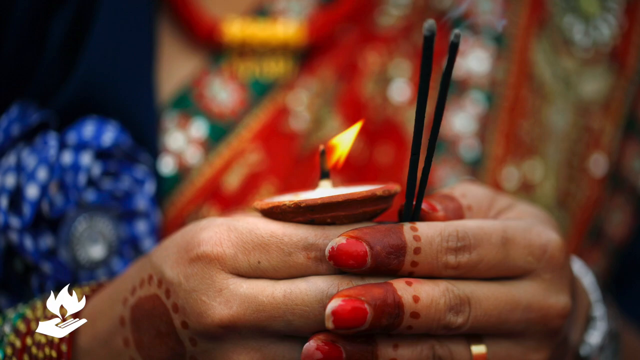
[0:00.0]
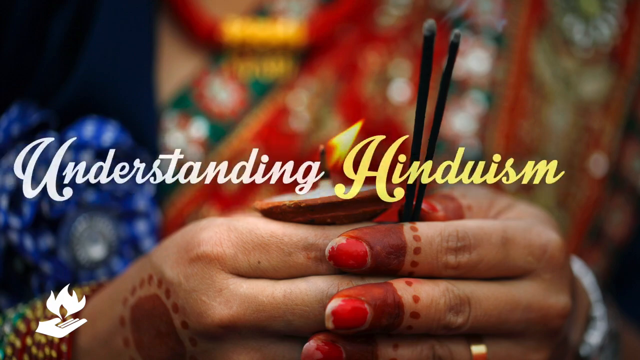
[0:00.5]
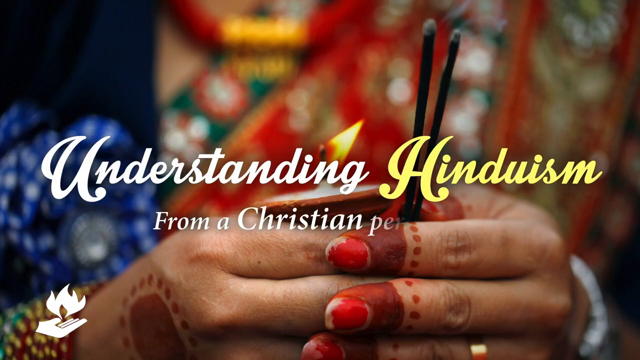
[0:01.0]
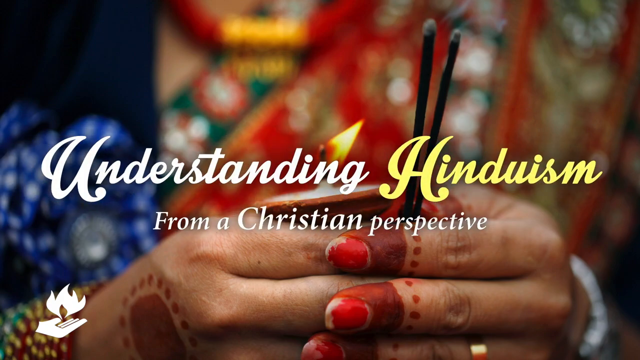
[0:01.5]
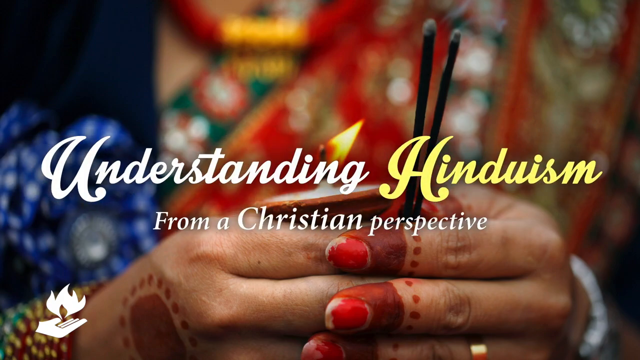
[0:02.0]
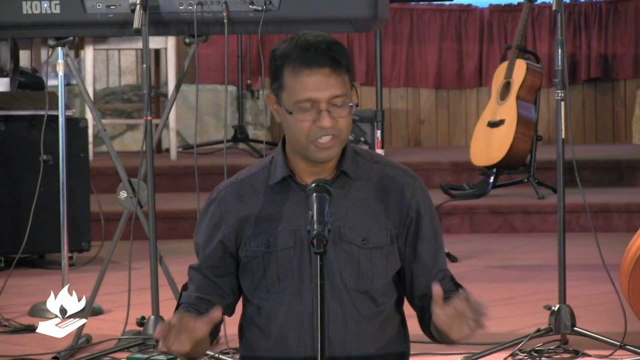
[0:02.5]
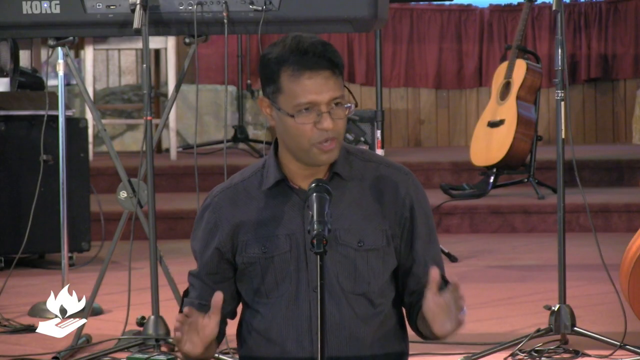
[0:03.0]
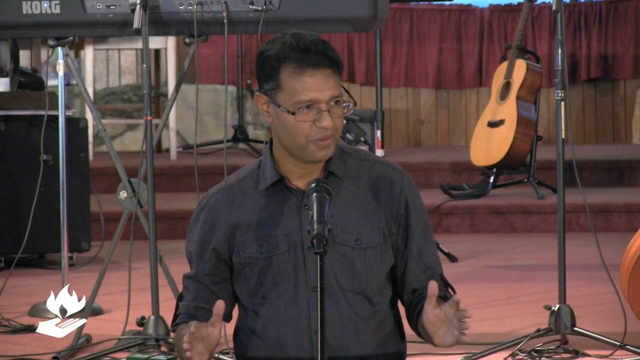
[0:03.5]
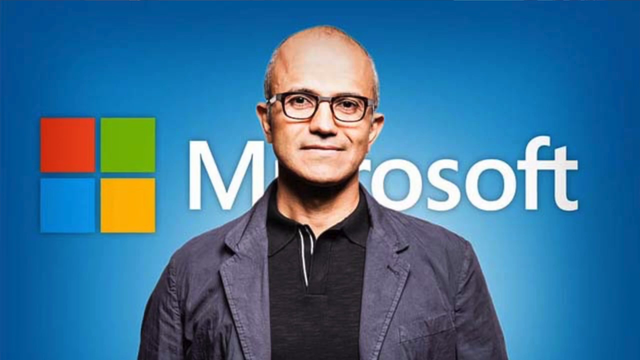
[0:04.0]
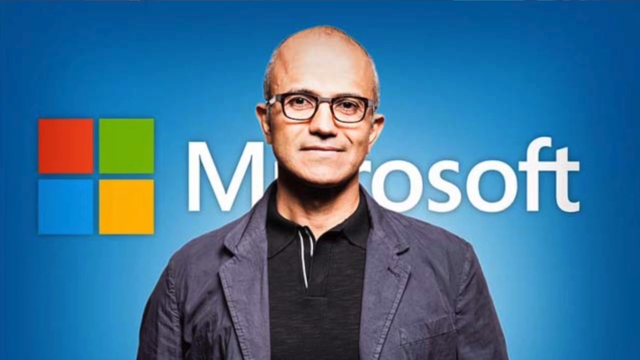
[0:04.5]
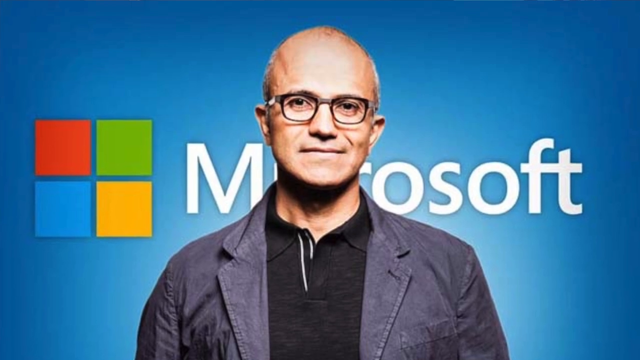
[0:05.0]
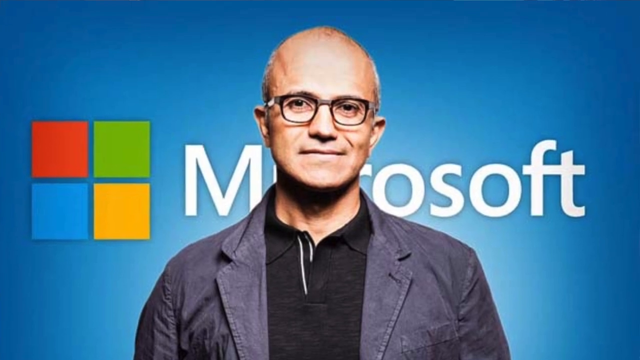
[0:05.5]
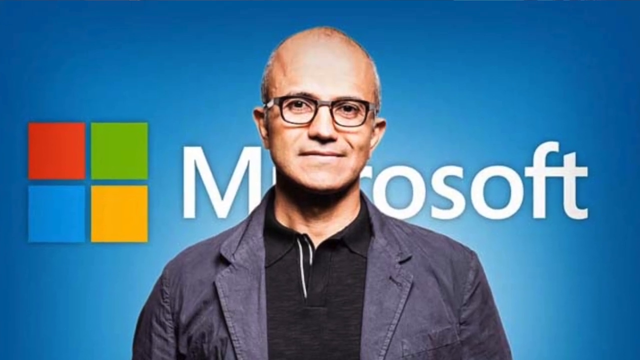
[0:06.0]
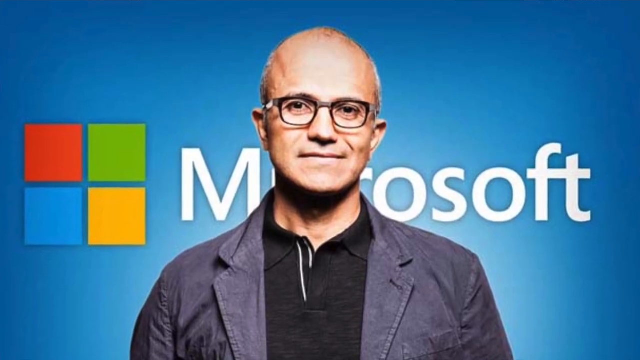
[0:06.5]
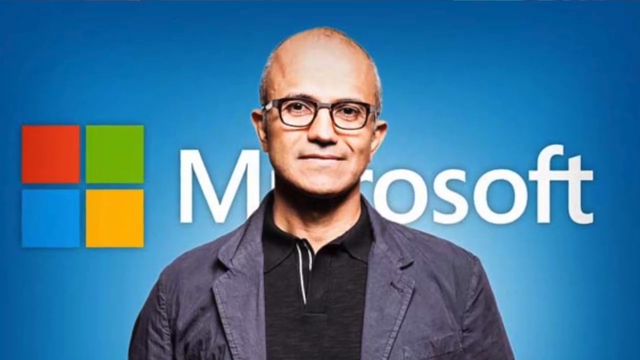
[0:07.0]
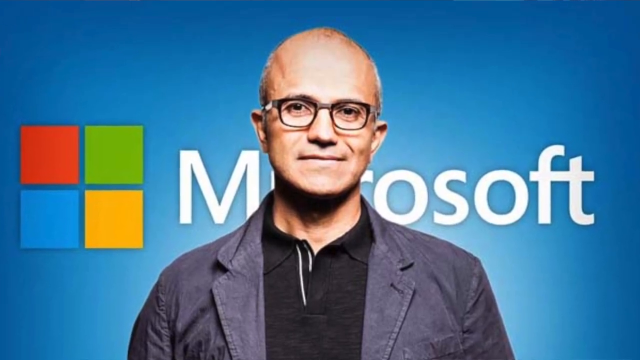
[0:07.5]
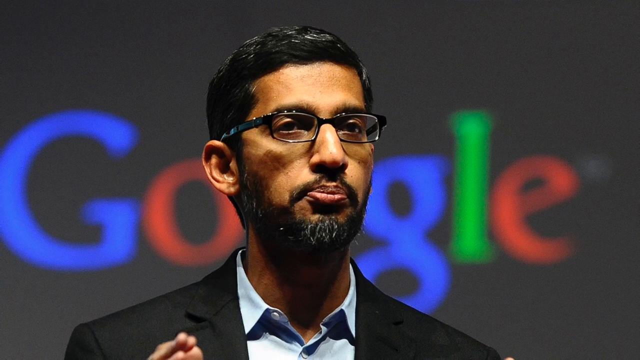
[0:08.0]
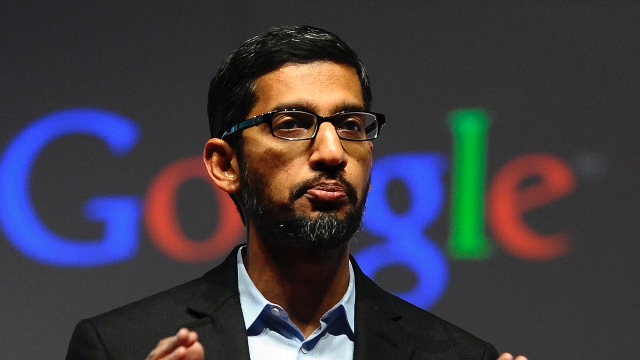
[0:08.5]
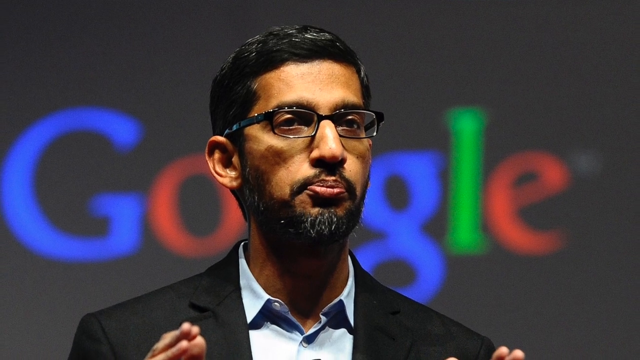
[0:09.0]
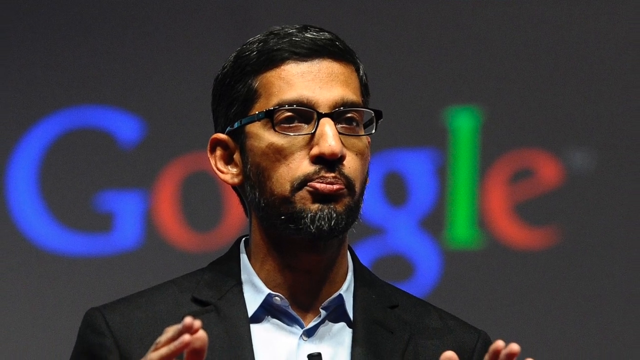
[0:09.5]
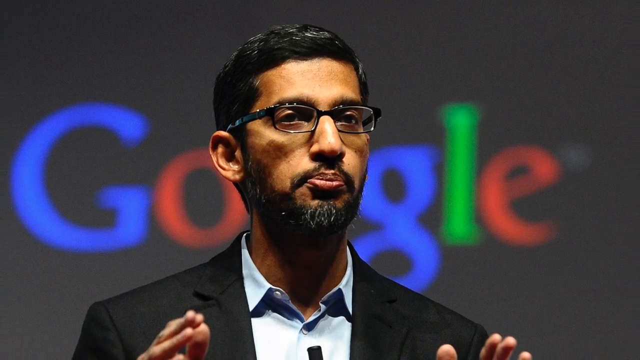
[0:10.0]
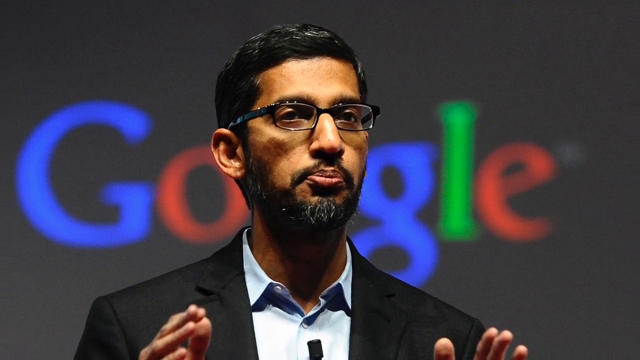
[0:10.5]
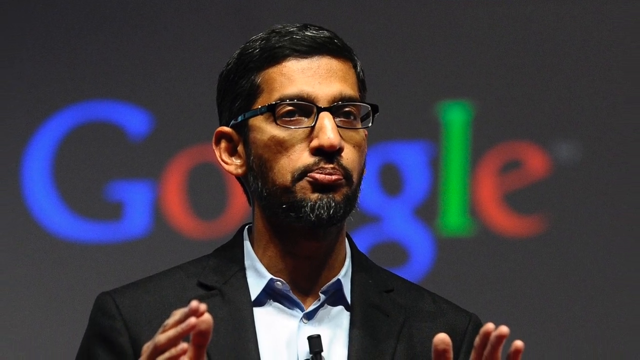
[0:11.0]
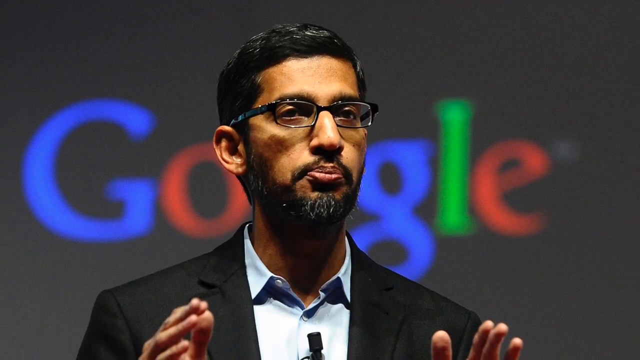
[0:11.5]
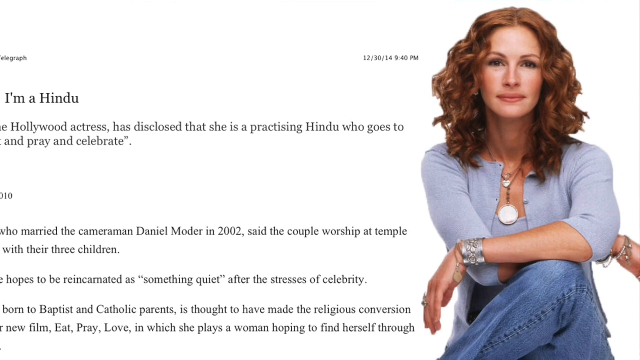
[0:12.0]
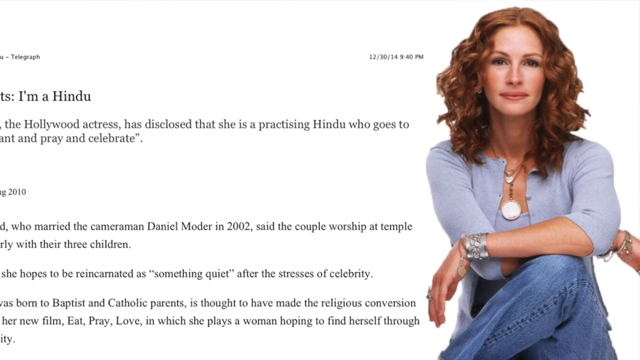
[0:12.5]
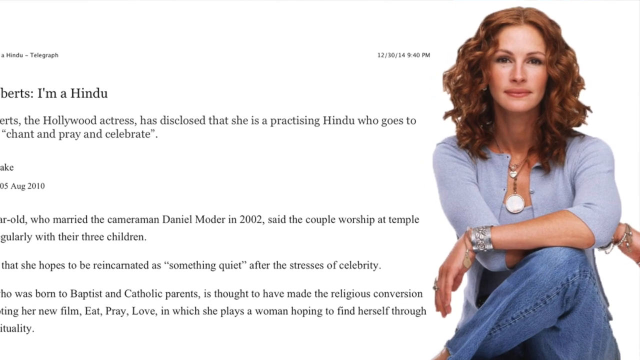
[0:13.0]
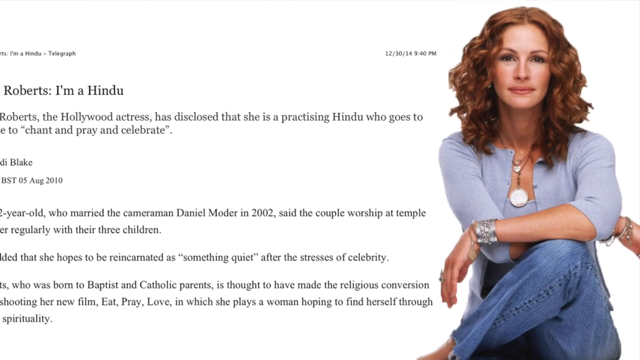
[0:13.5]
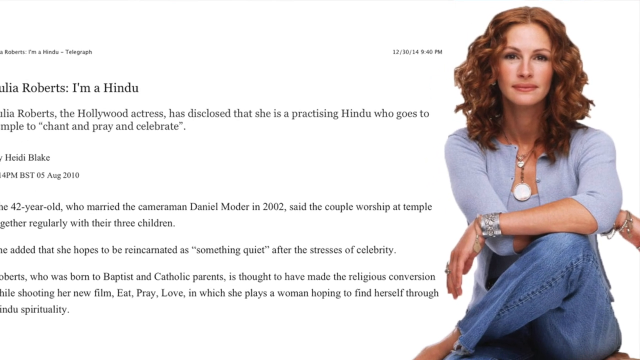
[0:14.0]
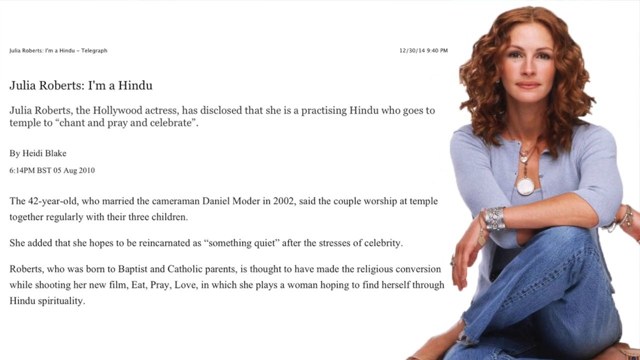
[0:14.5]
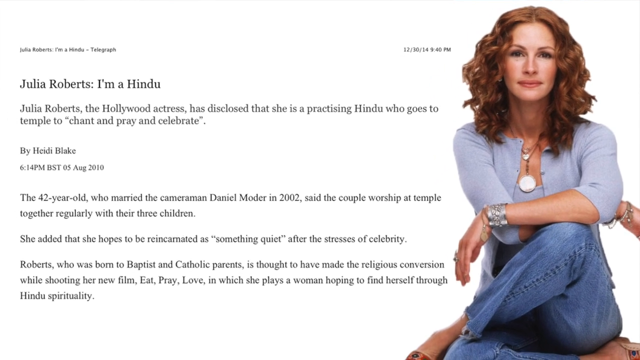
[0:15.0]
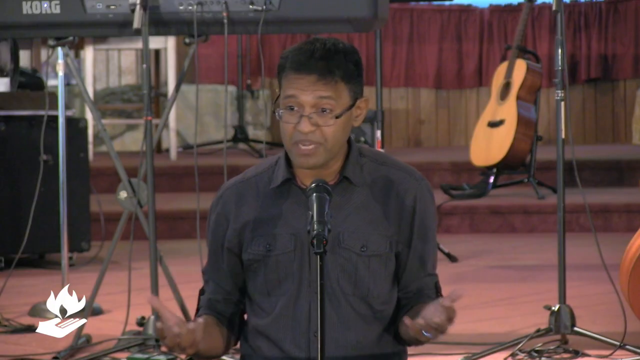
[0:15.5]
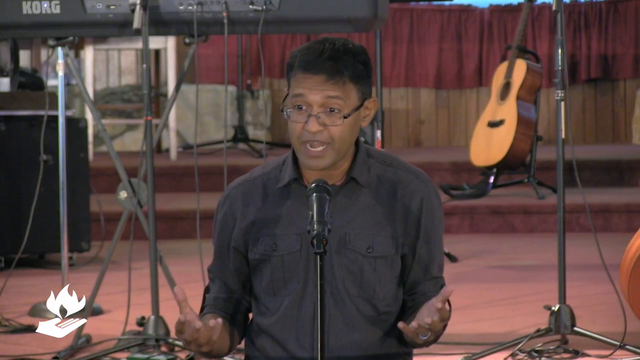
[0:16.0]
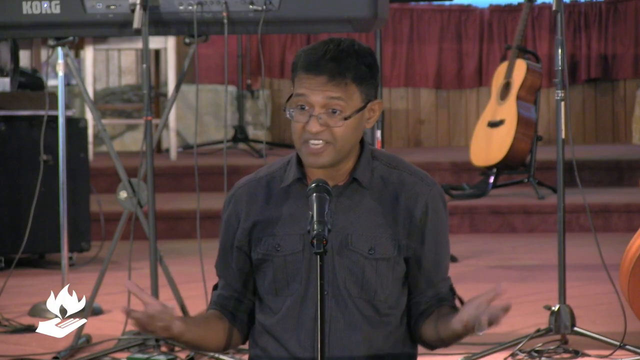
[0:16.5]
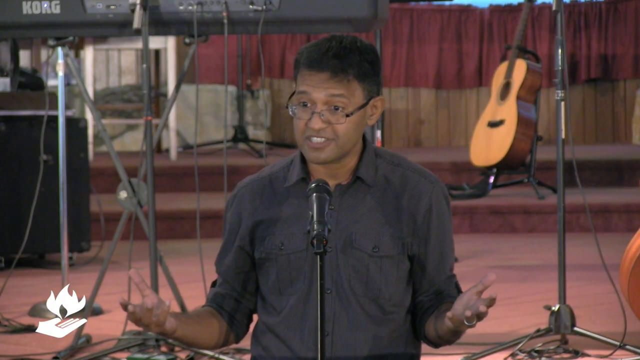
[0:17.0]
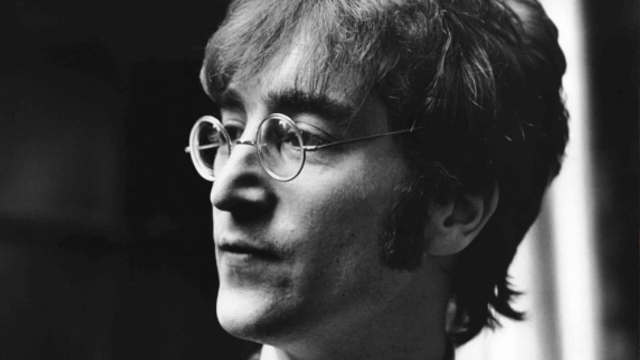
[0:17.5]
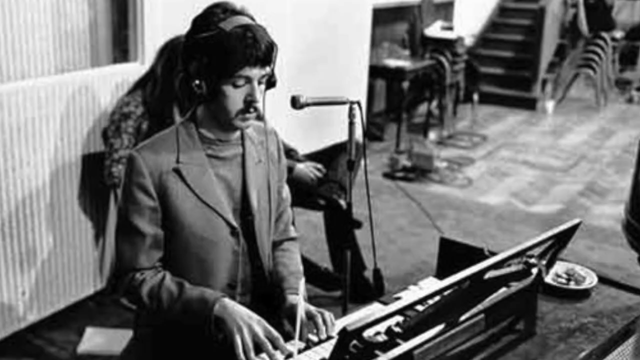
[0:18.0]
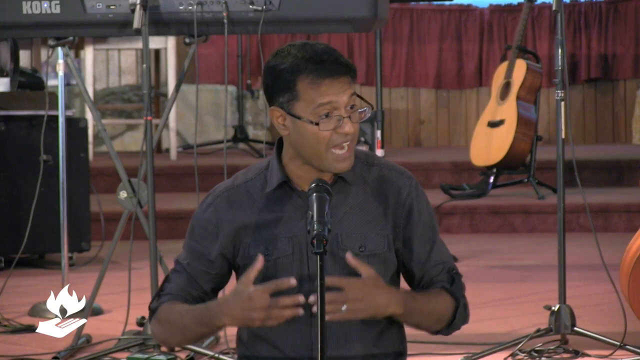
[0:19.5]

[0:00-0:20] A pair of hands holds two incense sticks and one candle. The fingertips on the right-hand side appear to be painted red with dots, and the woman's fingernails have chipped red polish. A title comes in: "understanding" in white and "Hinduism" in yellow, with "from a Christian perspective" in white text underneath. A man in a gray shirt wearing glasses is in front of a mic. He speaks briefly before the screen transitions to another man, behind whom "Microsoft" appears on an all-blue screen, with a window sign to his left. This man is almost completely bald, wears glasses, and has on a blue jacket or shirt over a black collared shirt. The camera zooms in very slowly. Another man with glasses and some gray in his beard appears, with a sign behind him that says "Google". Next, a page reads "Julia Roberts. I'm a Hindu. Julia Roberts." with a picture of Julia Roberts on the right, wearing jeans.